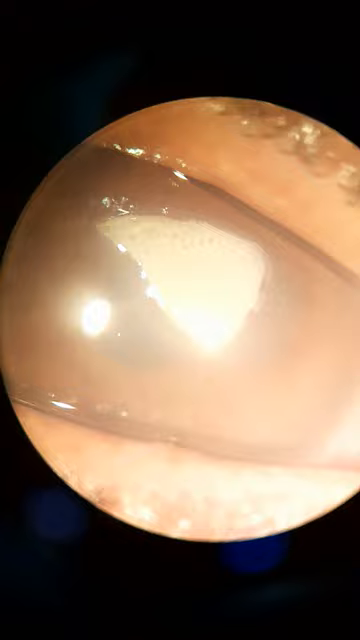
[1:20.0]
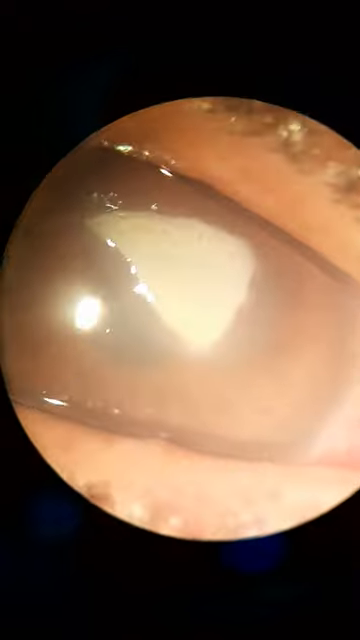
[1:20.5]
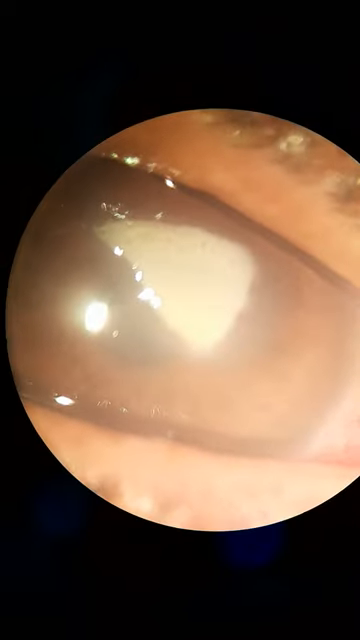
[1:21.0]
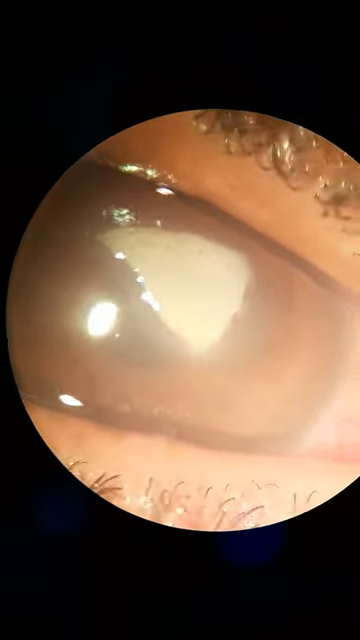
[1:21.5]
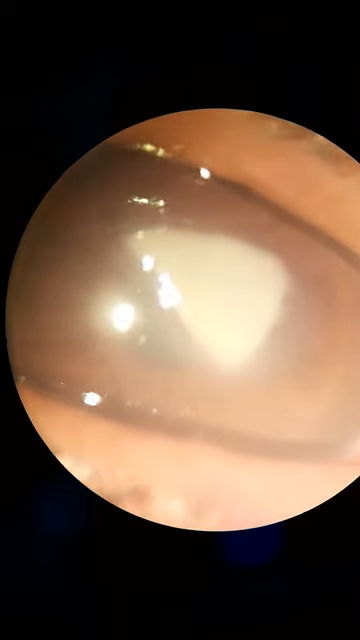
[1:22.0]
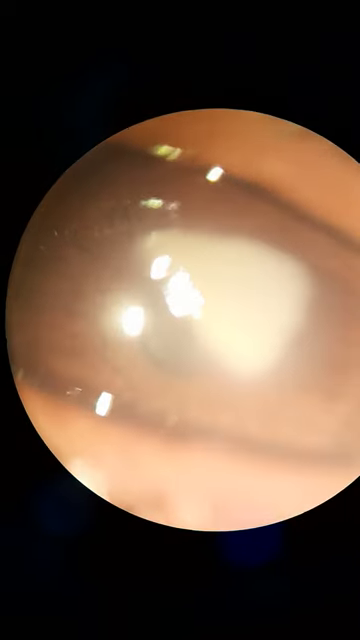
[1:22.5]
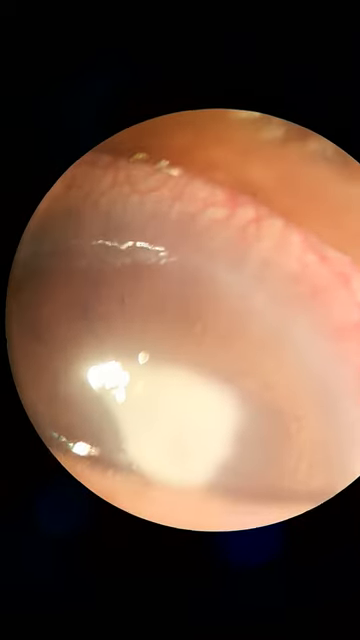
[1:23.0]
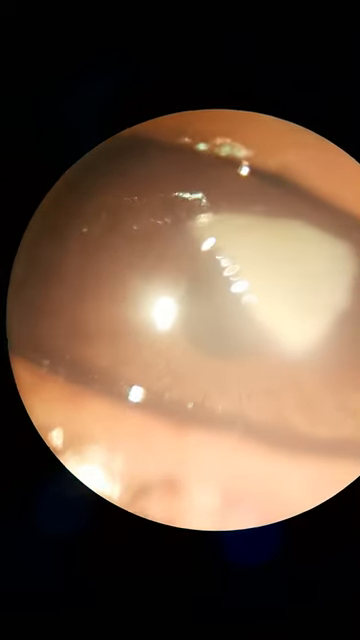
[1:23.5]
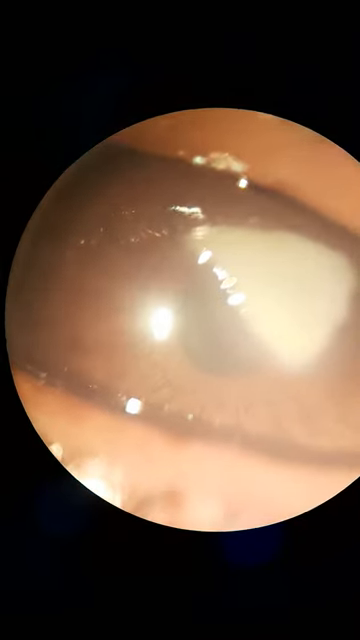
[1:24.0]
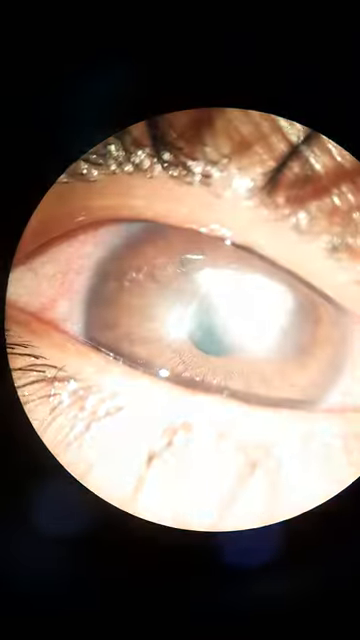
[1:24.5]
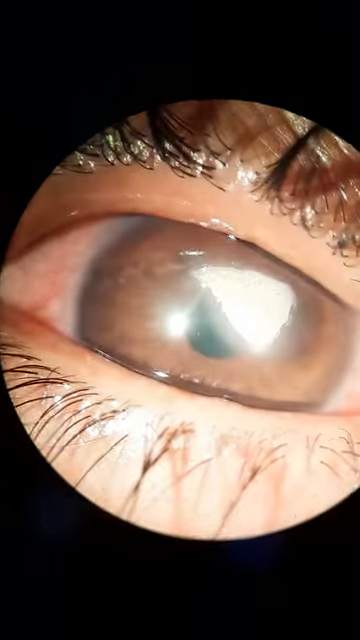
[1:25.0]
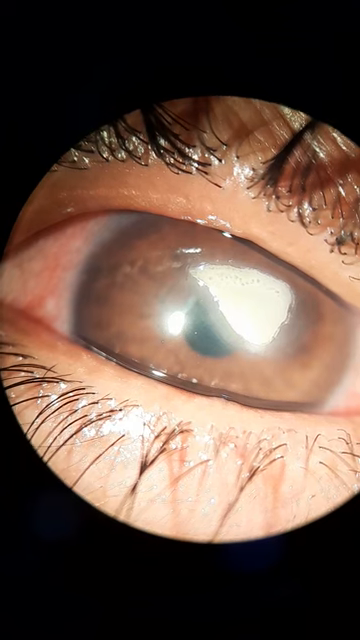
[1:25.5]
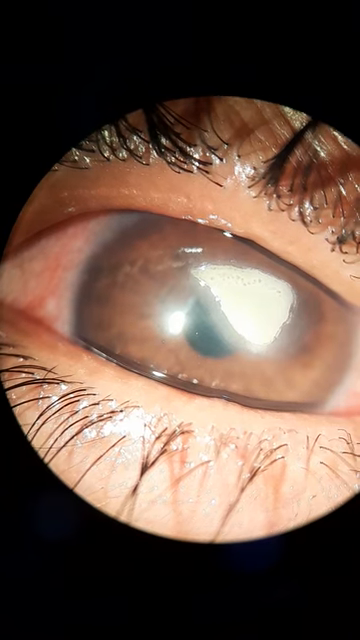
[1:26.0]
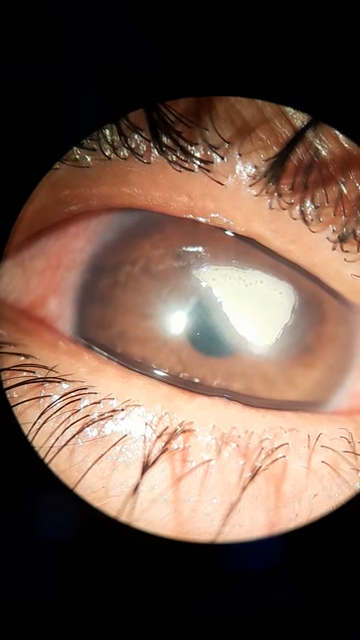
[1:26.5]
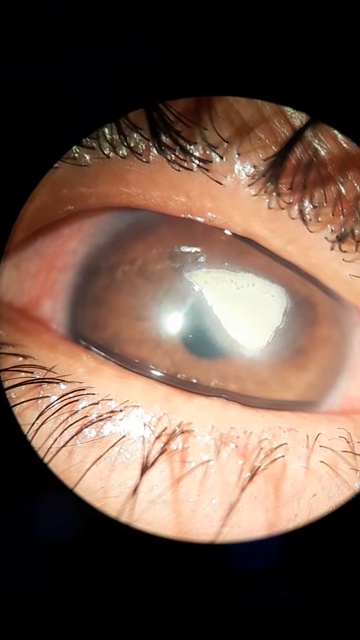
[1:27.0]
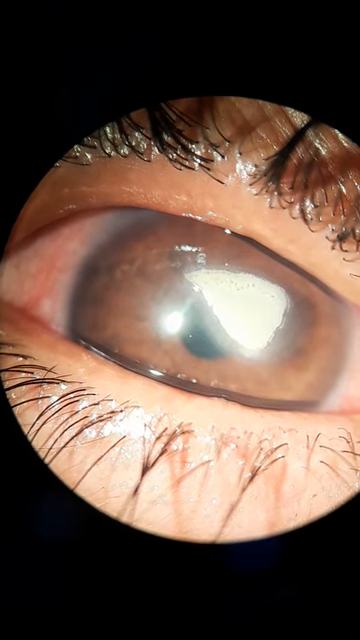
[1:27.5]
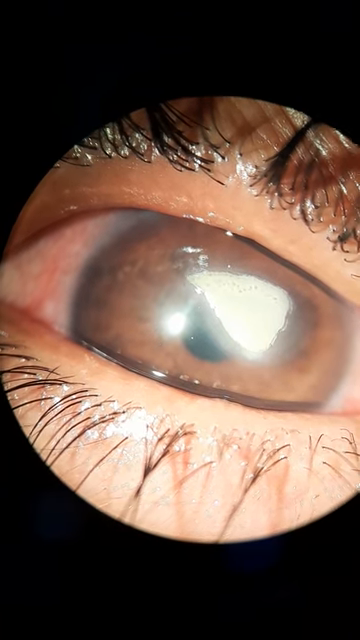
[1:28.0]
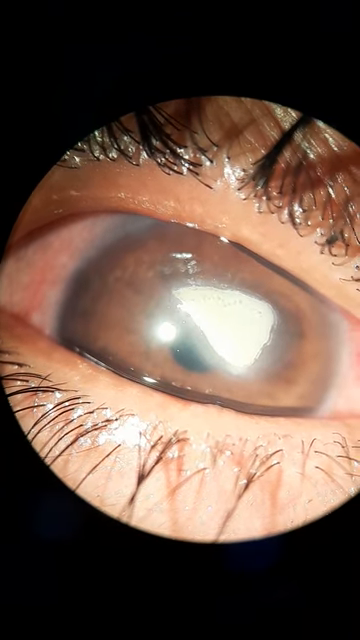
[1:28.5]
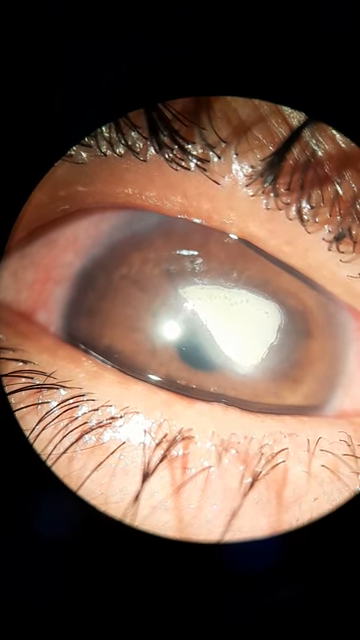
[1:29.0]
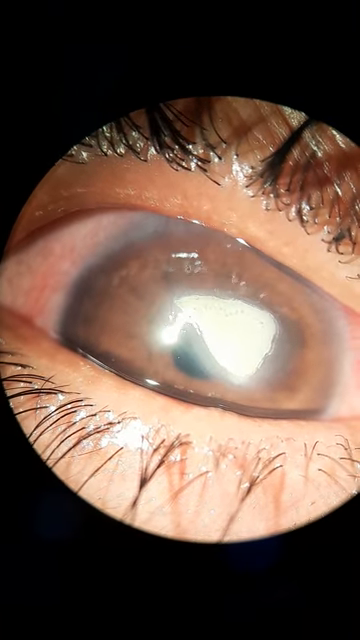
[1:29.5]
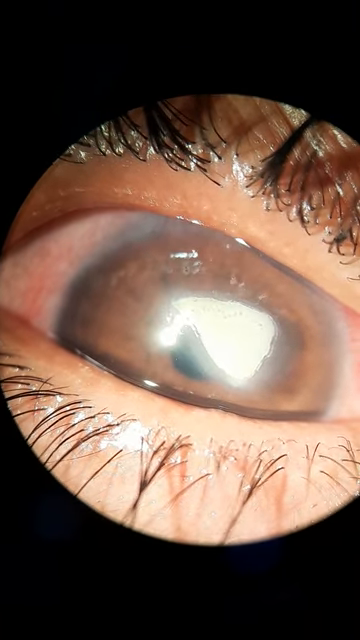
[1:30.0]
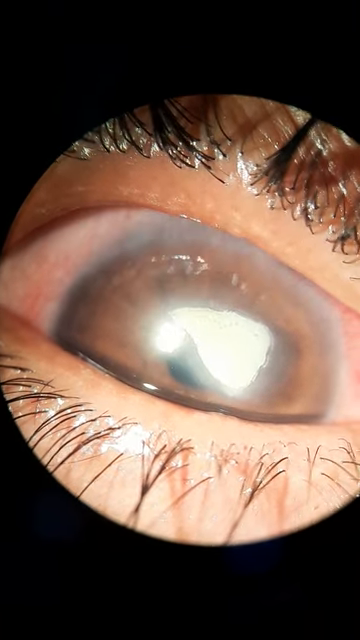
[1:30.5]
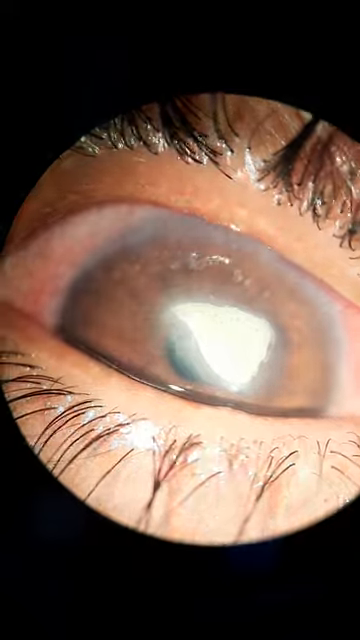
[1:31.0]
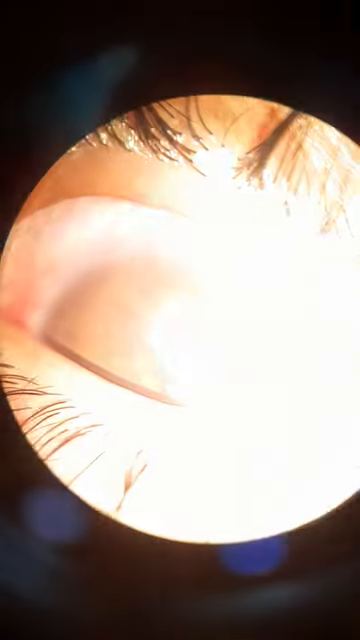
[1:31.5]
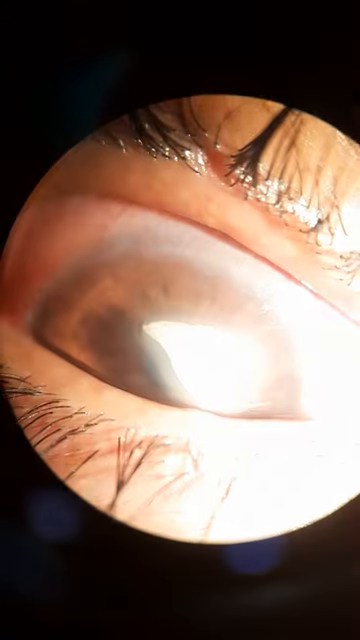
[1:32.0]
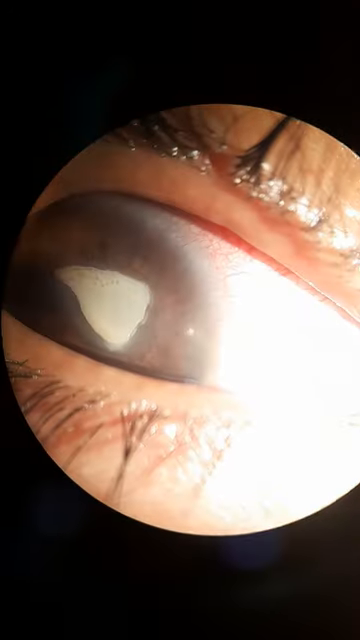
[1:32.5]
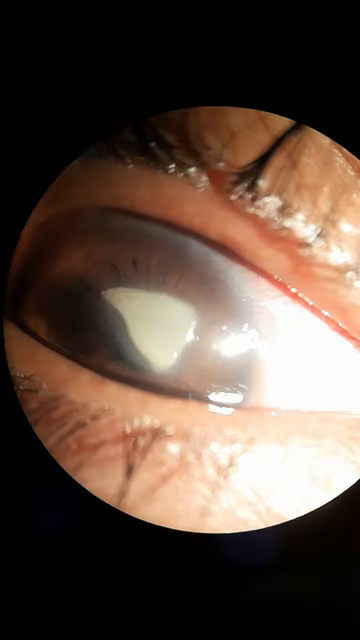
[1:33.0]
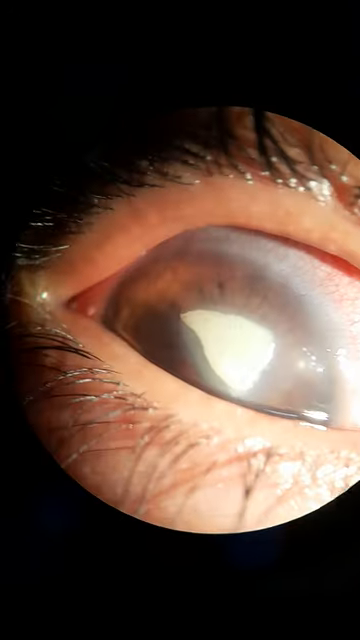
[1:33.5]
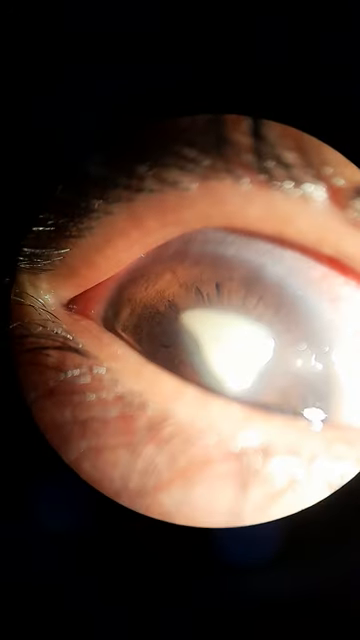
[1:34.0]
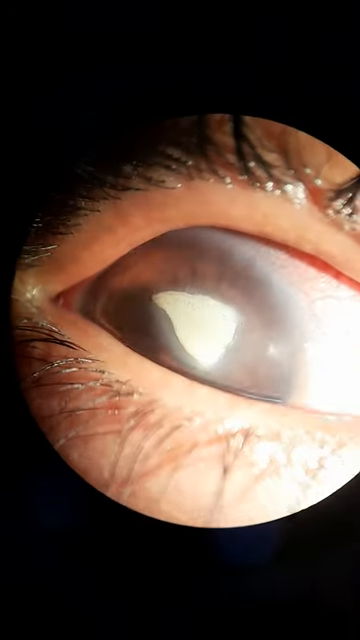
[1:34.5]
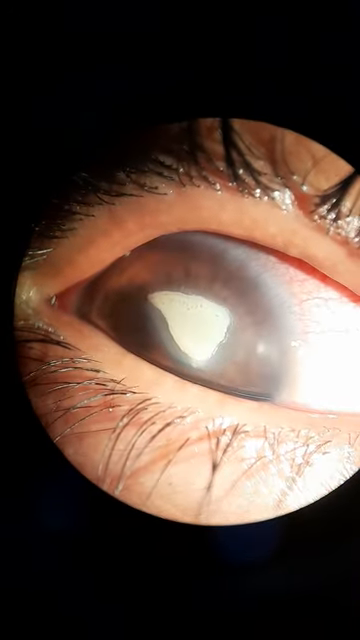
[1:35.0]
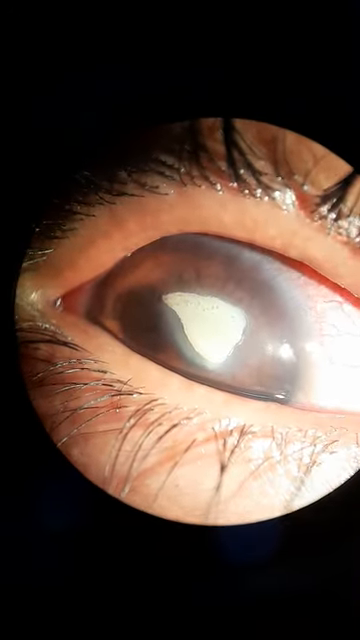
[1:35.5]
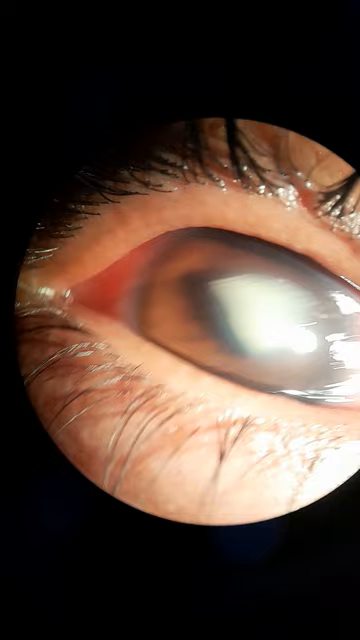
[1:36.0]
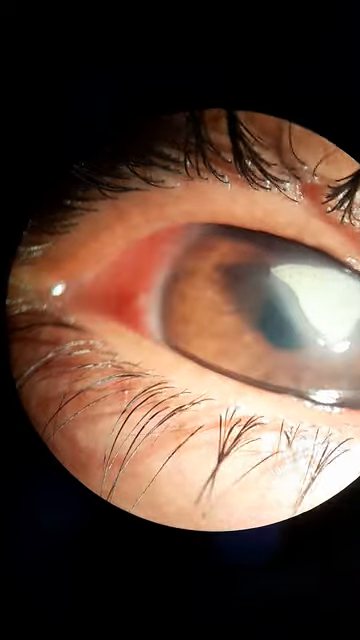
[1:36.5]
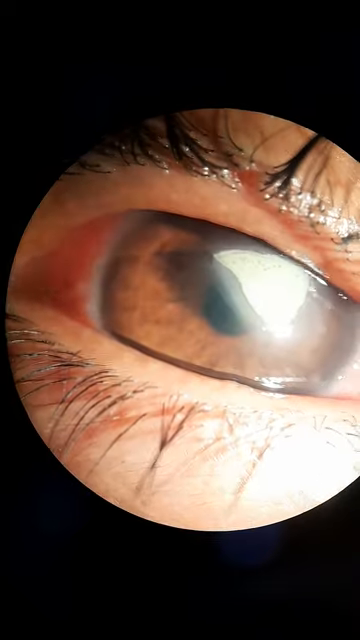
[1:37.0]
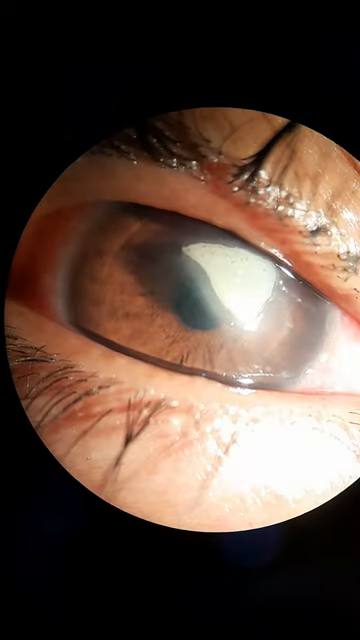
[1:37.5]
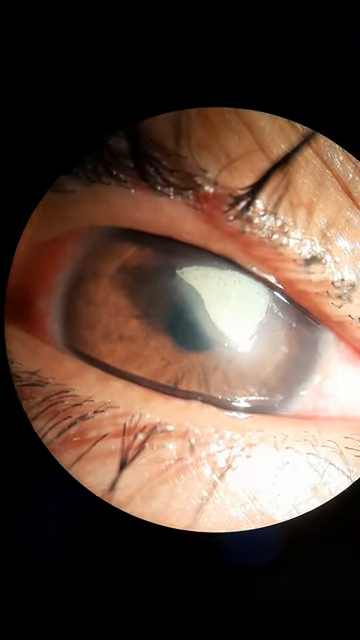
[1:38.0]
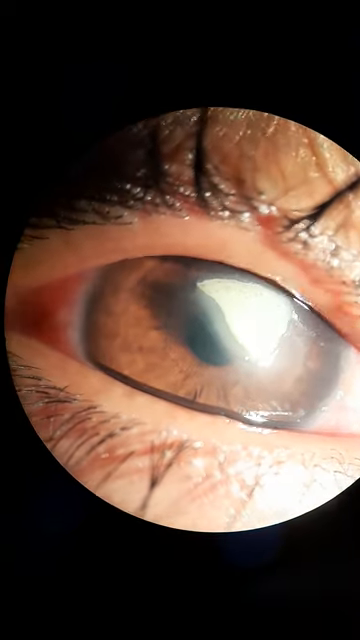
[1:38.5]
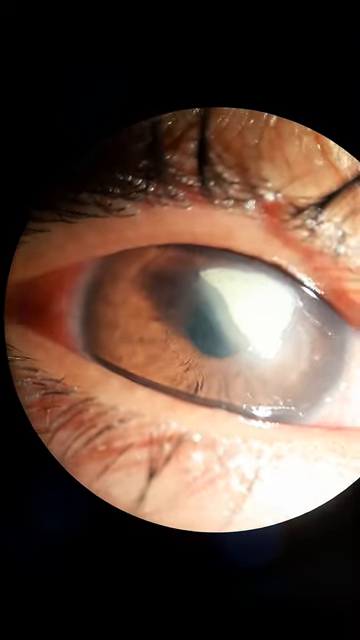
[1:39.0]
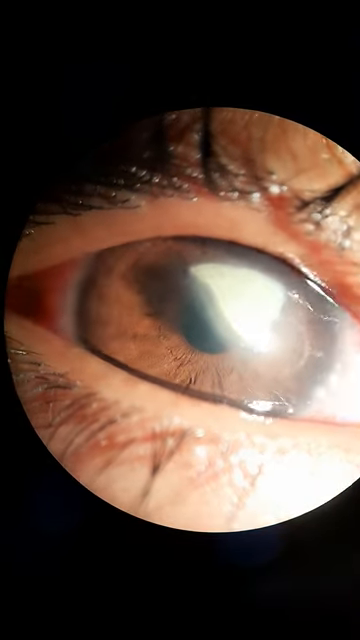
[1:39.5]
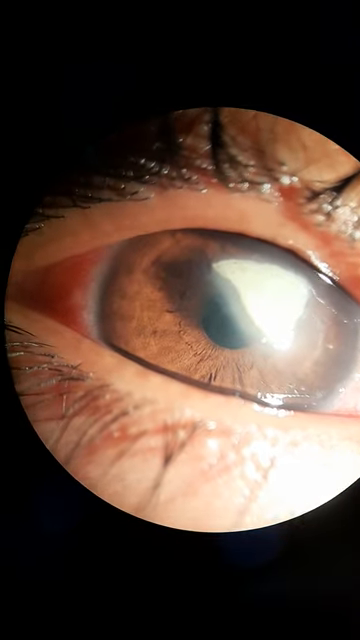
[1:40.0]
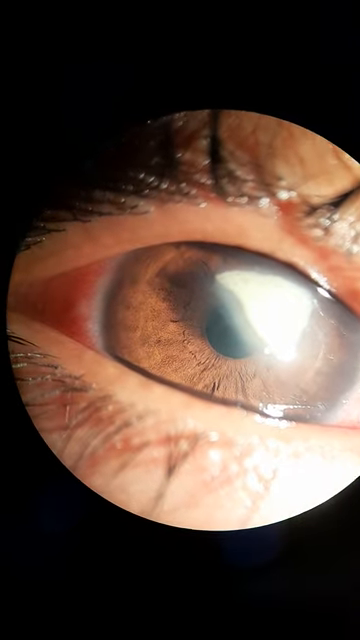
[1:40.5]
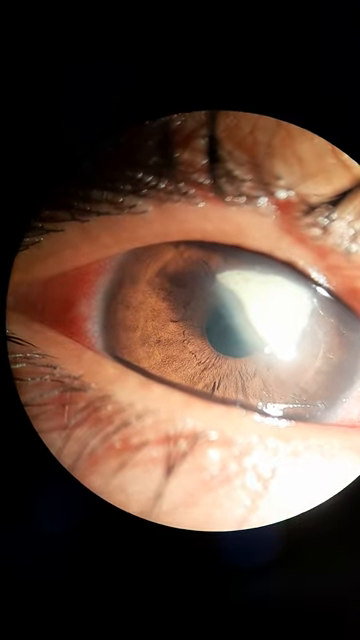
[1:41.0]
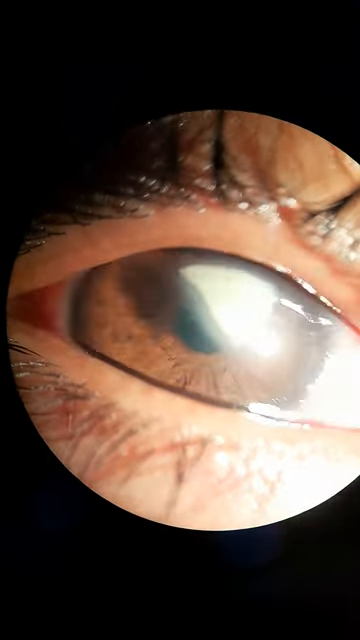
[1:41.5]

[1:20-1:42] A very close-up image of an eyeball examination continues, with the camera fixed on the person's eyeball. The person appears to have brown eyes, with a lot of redness around the eyes, and wet eyelashes are visible. A very bright light is shined into the eyes during this examination of some kind. The person's eyes appear to dart all over the room. The background is black, with simply a circle focusing on the eyes. No fingers can be seen being used to open or close the eyes.